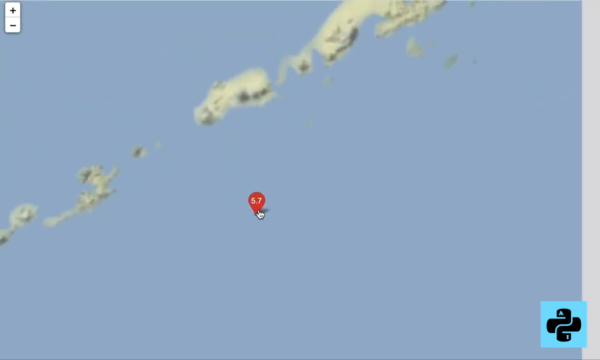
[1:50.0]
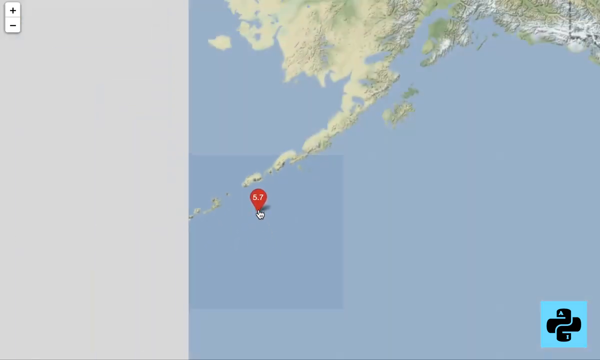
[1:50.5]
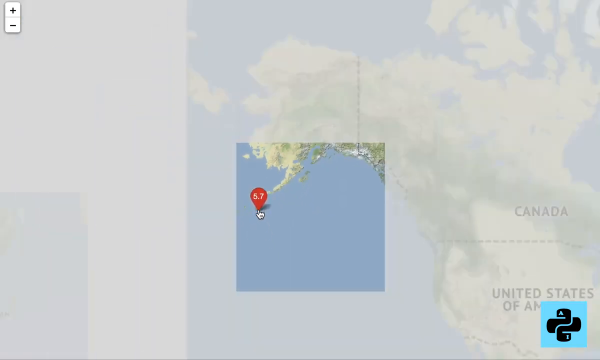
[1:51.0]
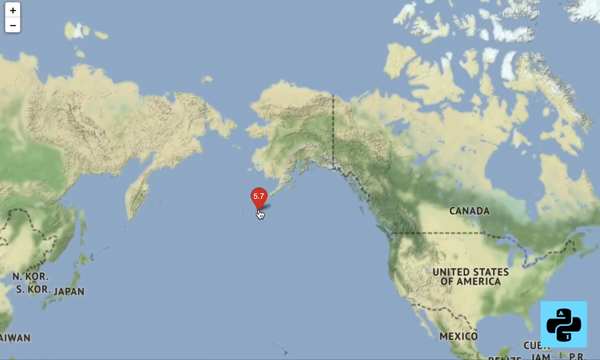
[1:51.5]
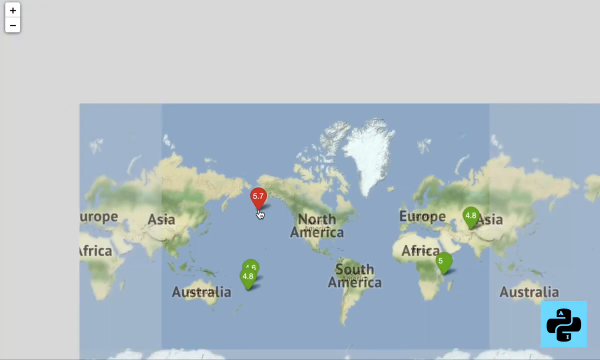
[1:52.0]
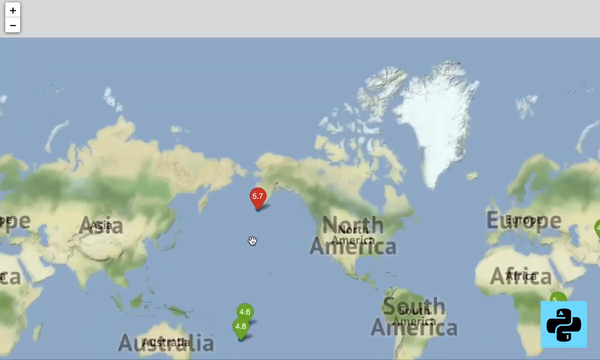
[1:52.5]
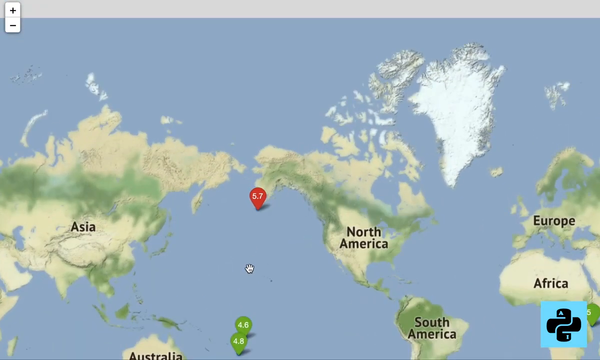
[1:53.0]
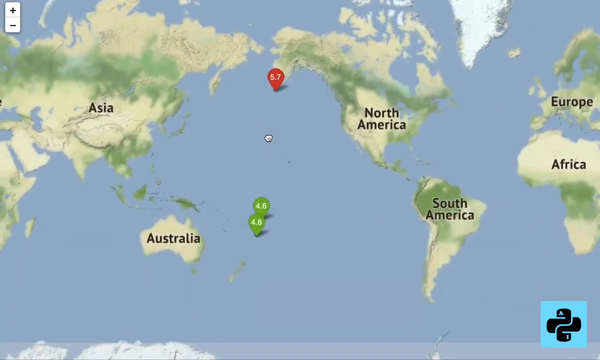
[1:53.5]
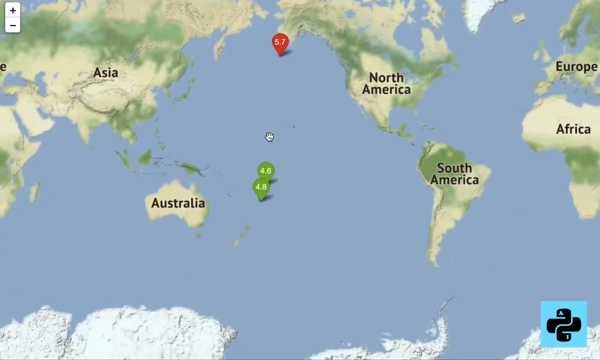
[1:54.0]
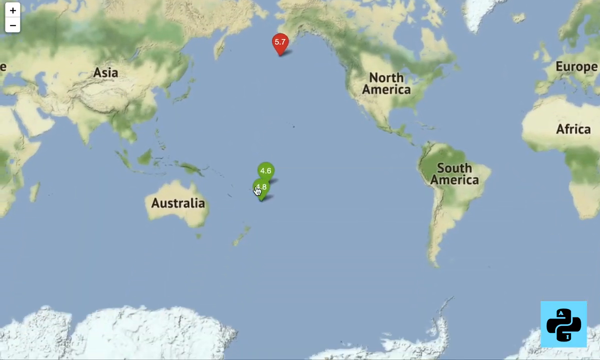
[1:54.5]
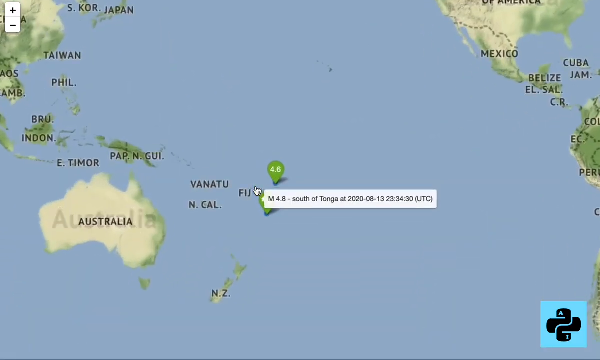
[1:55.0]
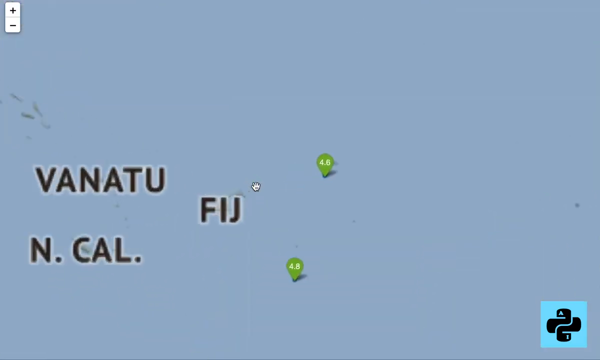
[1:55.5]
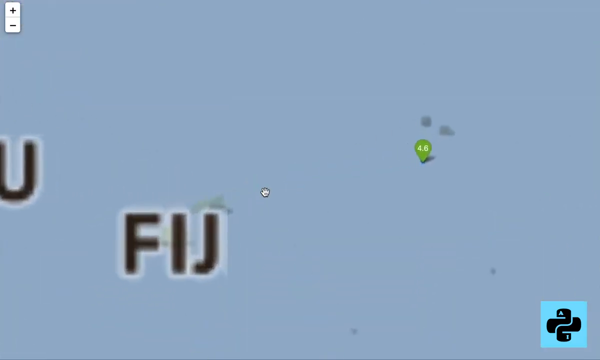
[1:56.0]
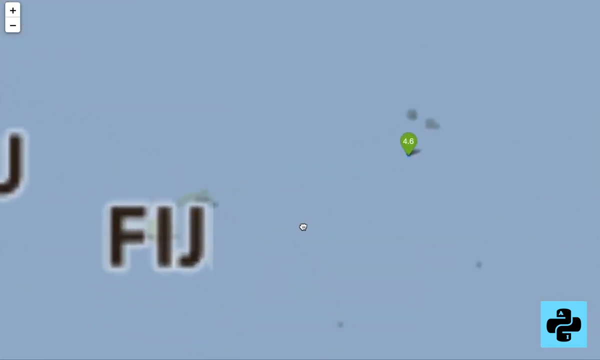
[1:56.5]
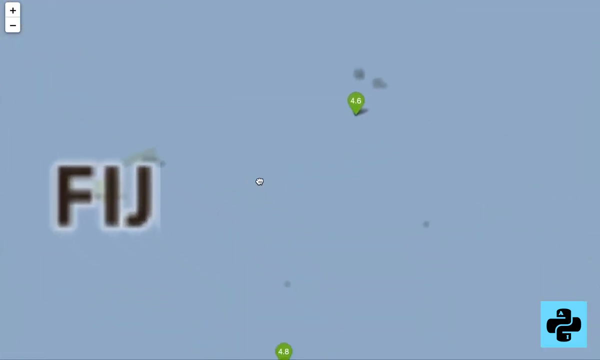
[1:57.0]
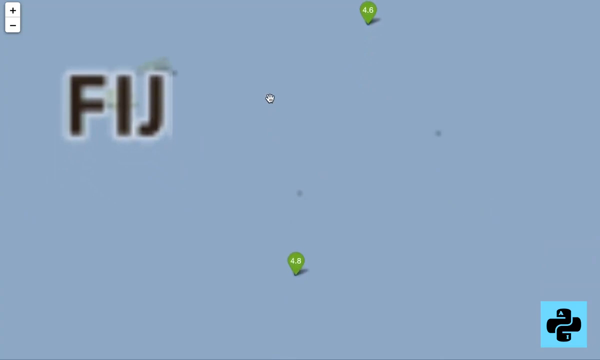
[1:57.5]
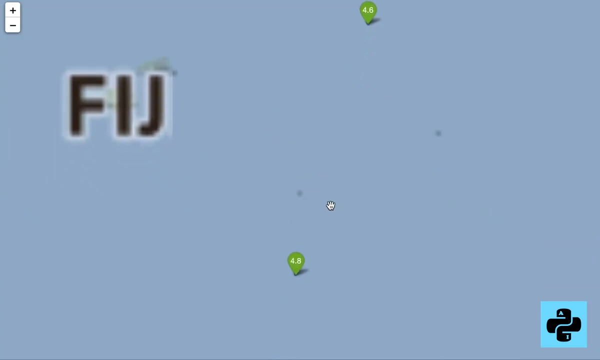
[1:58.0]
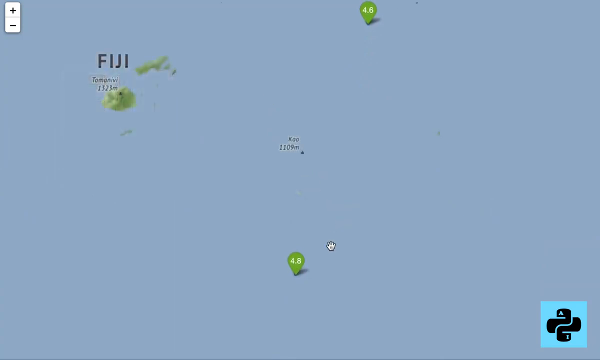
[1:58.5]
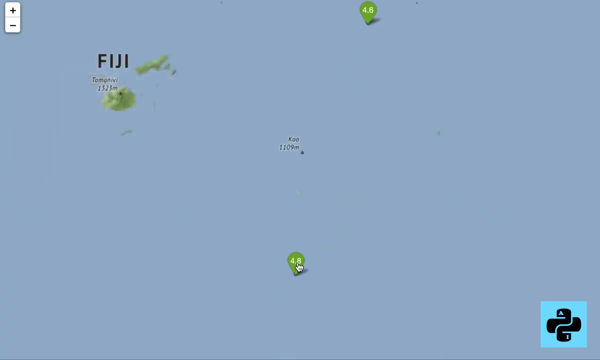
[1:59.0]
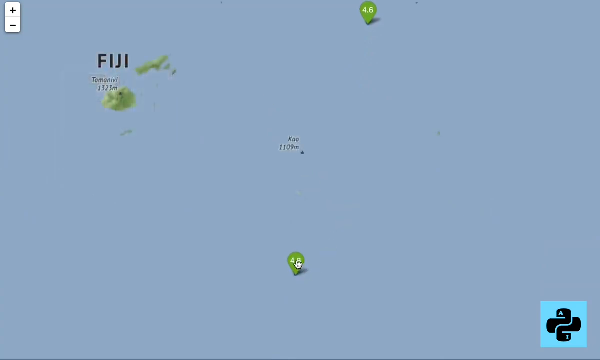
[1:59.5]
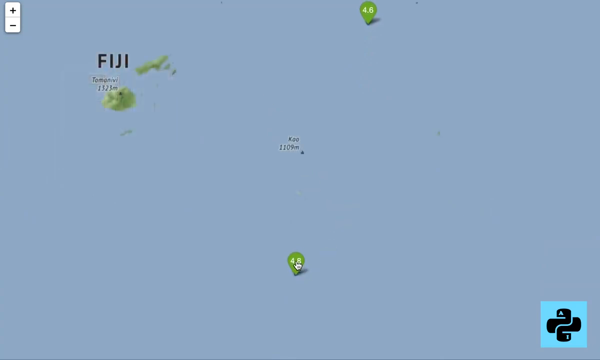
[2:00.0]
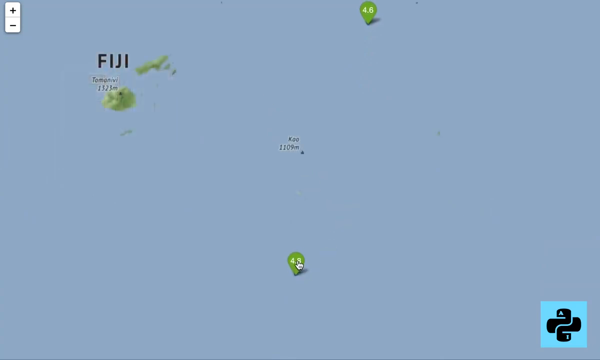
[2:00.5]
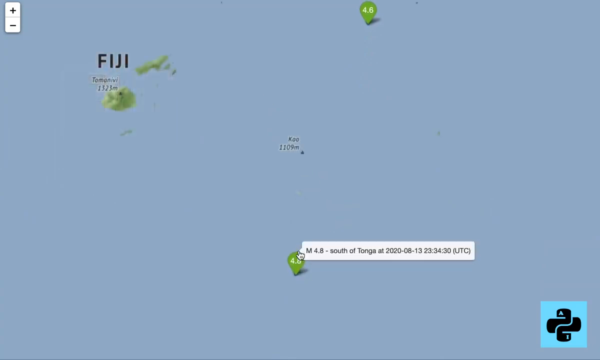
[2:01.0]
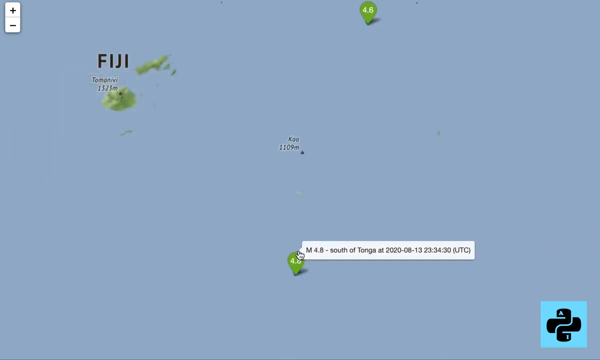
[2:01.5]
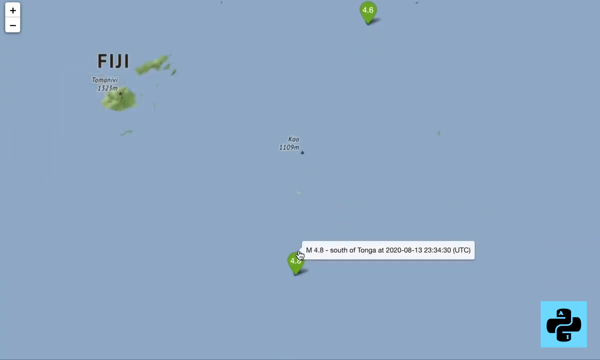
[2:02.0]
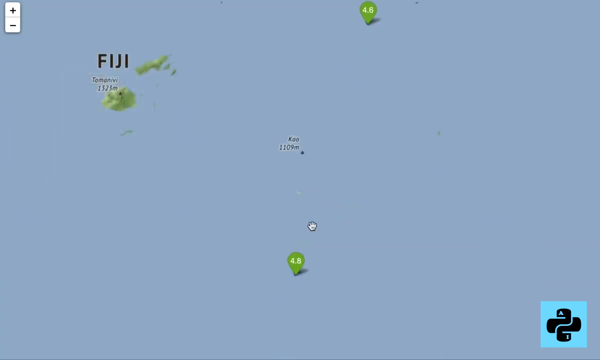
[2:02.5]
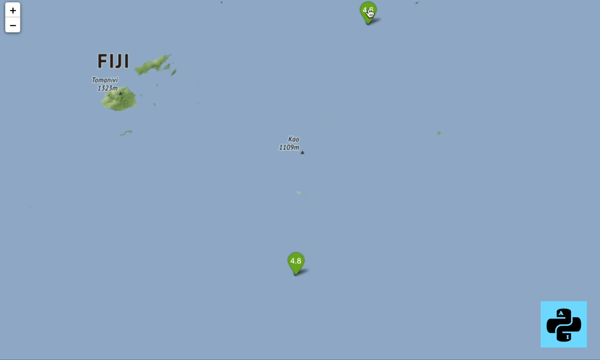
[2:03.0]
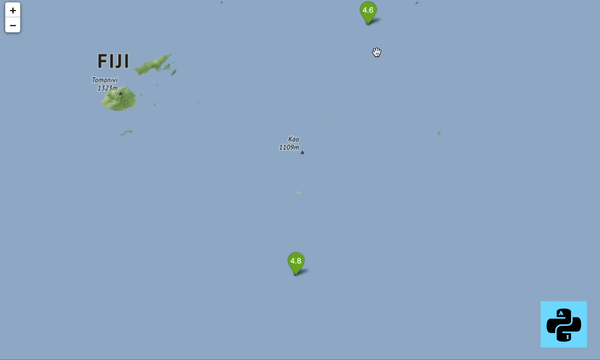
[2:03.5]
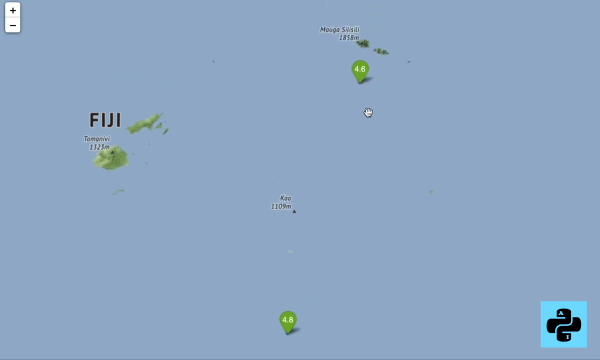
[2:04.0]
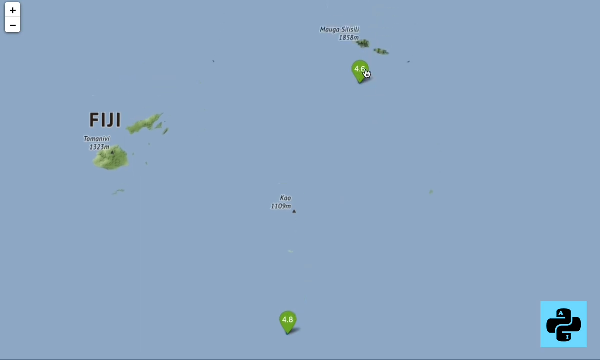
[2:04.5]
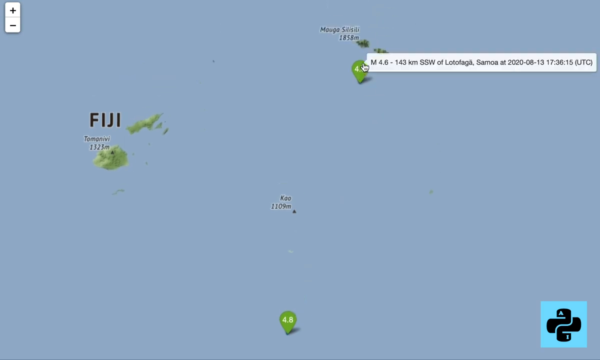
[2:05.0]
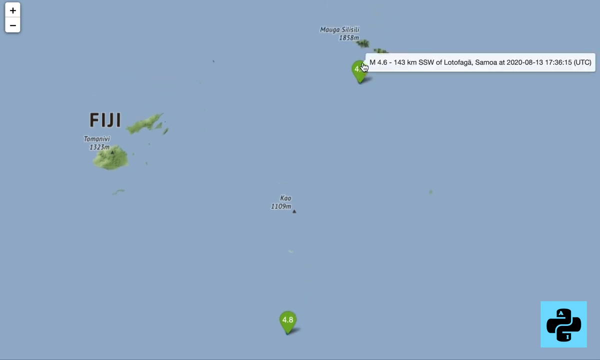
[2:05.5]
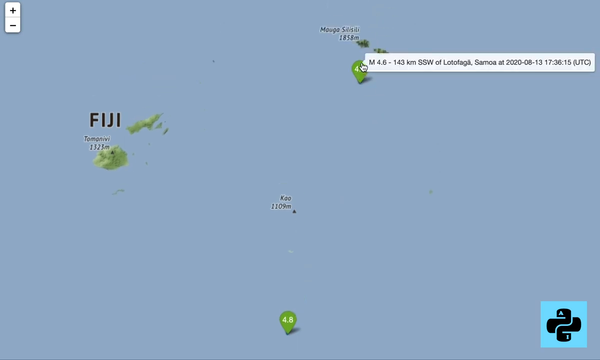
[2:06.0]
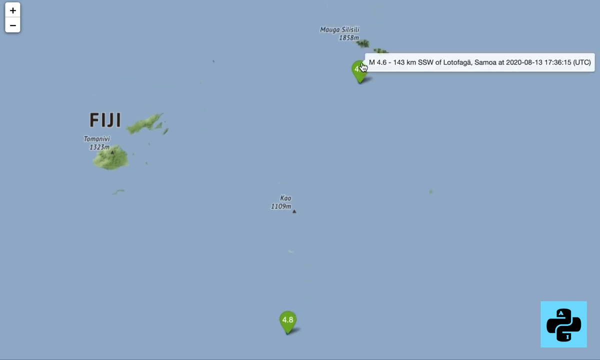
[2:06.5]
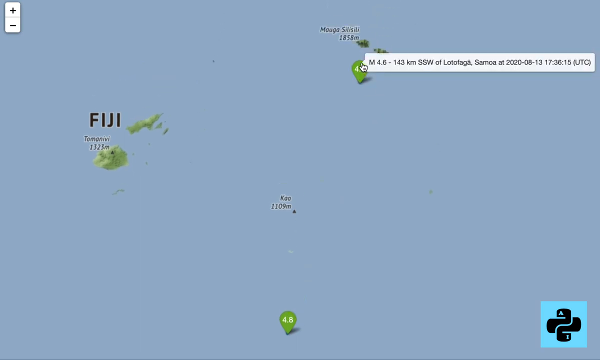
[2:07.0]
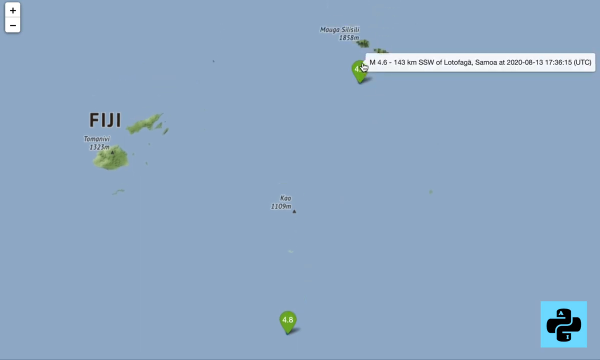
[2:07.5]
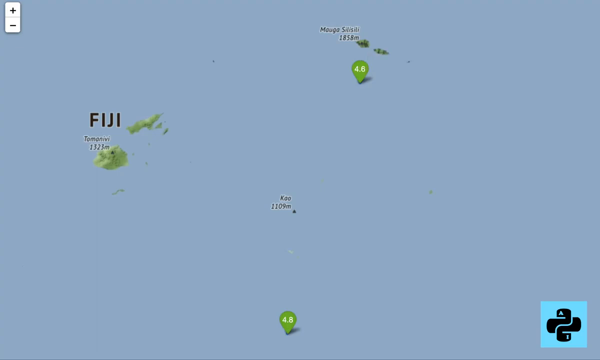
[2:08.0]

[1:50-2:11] A red marker is placed in the sea on a digital map. The view zooms much farther out to show many continents. The red marker, reading 5.7, is slightly below Alaska, and the other markers on the map are green. The view zooms in closer on two green markers to the east of Fiji, reading 4.6 and 4.8. The little hand first hovers over the 4.8 marker, off the southeastern coast of Fiji, then moves up to the 4.6 marker, off the northeastern coast. While the hand hovers over the 4.6 marker, information reads "4.6", "143 KMSSW of Lotofagli, Samoa" and "2020-06-13, 1736, 15" followed by "UTC" in parentheses. The hand stays over this marker for a few moments, then disappears off the screen. The 4.6 and 4.8 markers remain at the very bottom center of the screen, and the islands of Fiji are visible.